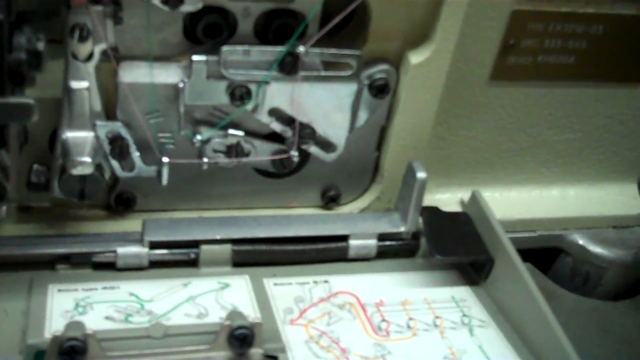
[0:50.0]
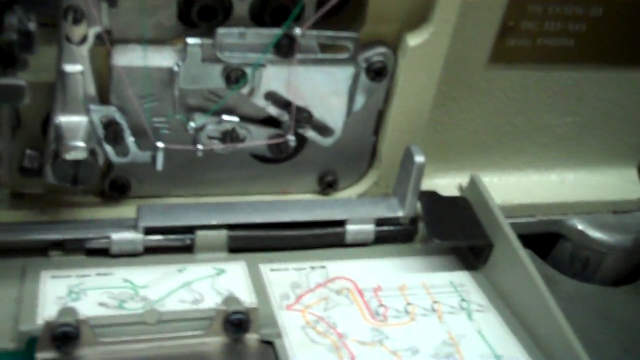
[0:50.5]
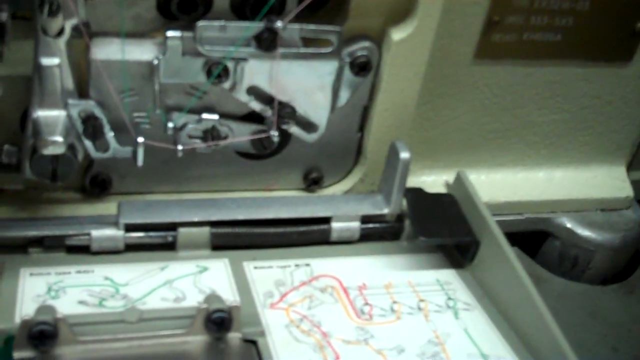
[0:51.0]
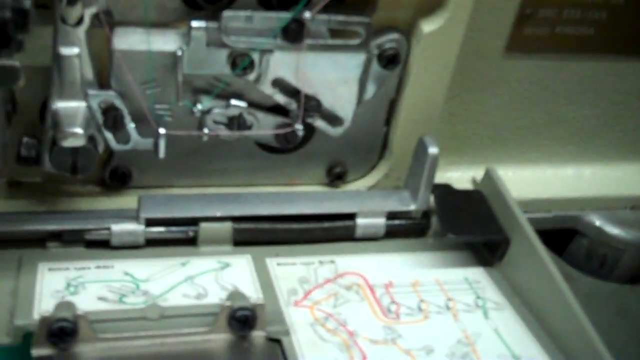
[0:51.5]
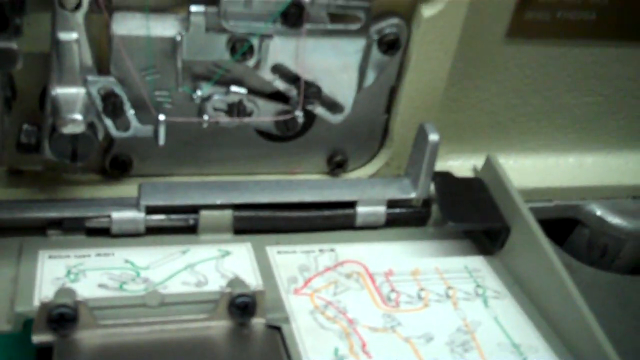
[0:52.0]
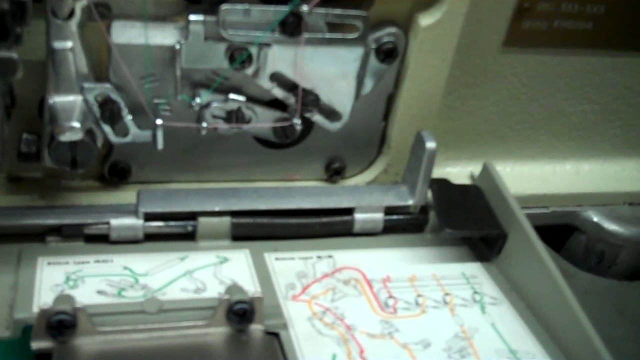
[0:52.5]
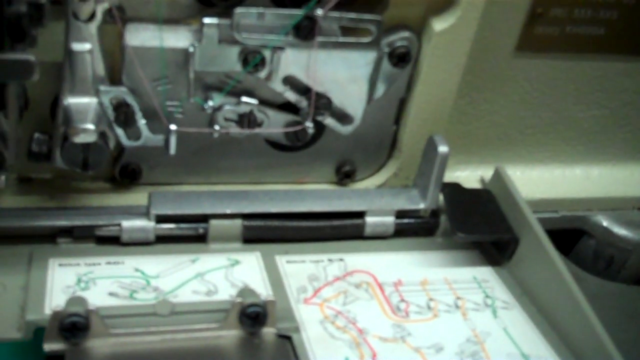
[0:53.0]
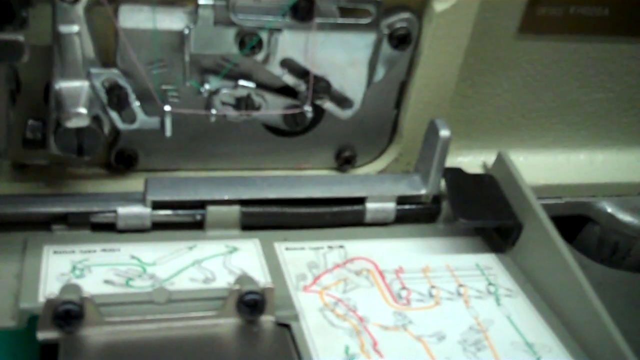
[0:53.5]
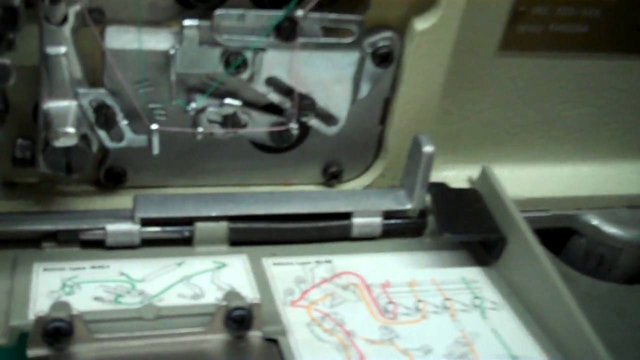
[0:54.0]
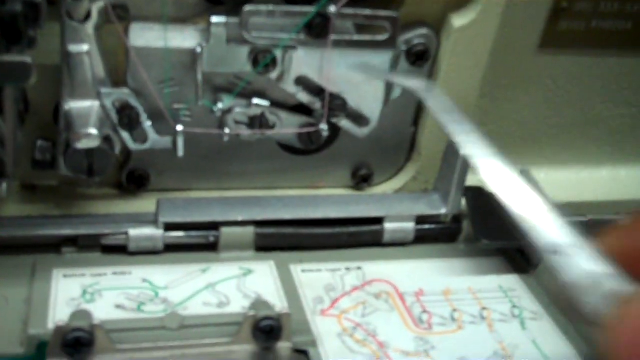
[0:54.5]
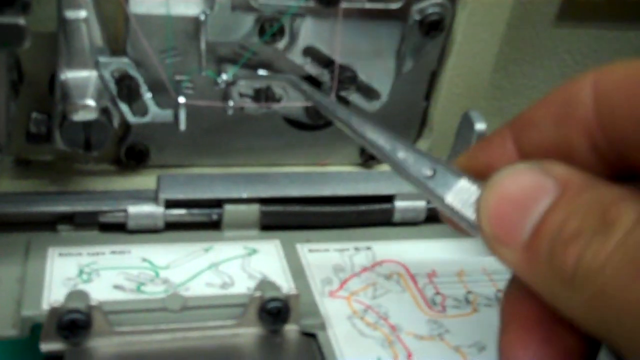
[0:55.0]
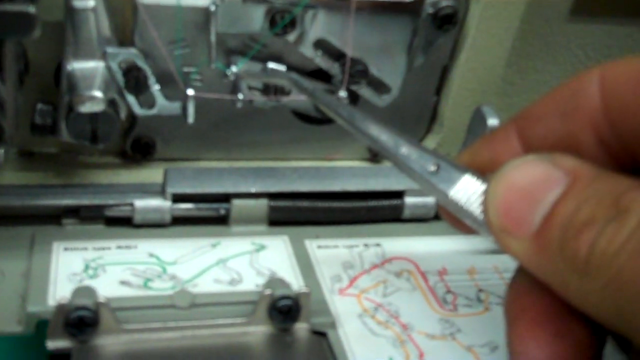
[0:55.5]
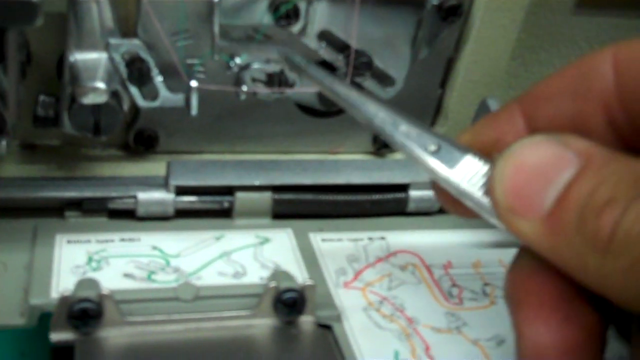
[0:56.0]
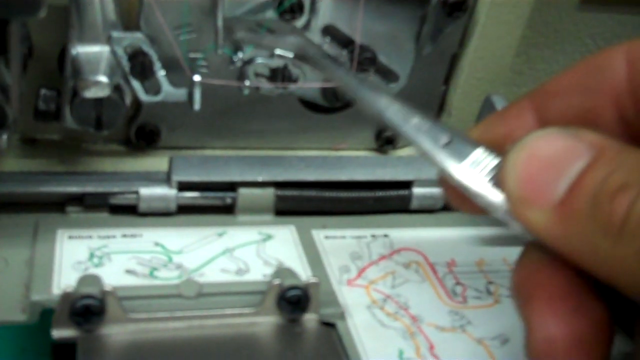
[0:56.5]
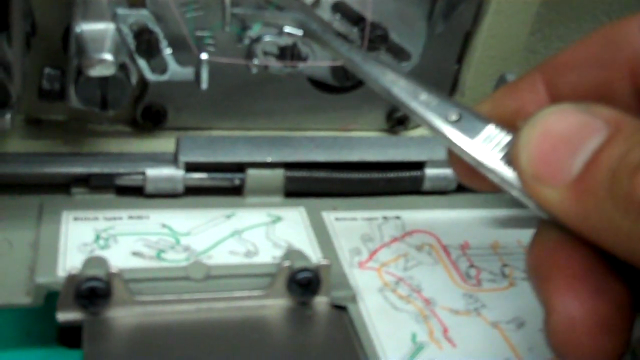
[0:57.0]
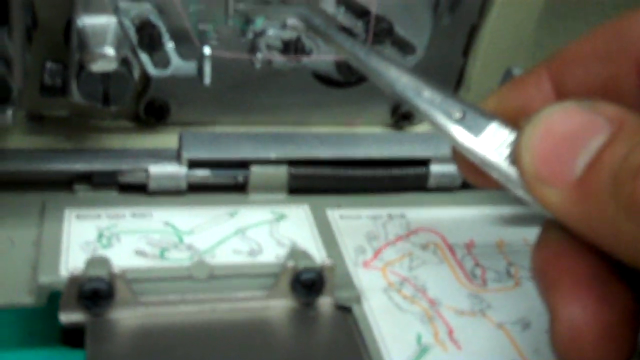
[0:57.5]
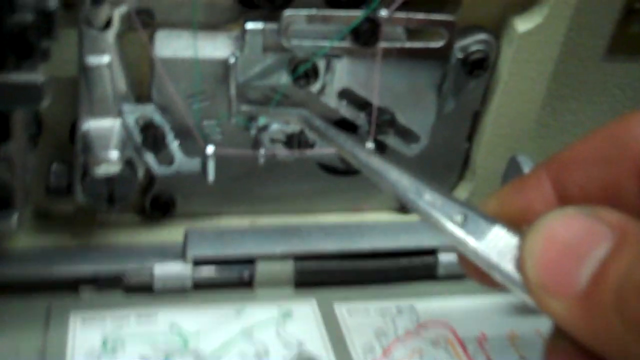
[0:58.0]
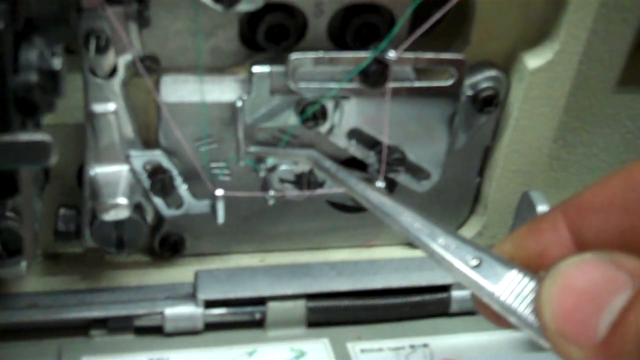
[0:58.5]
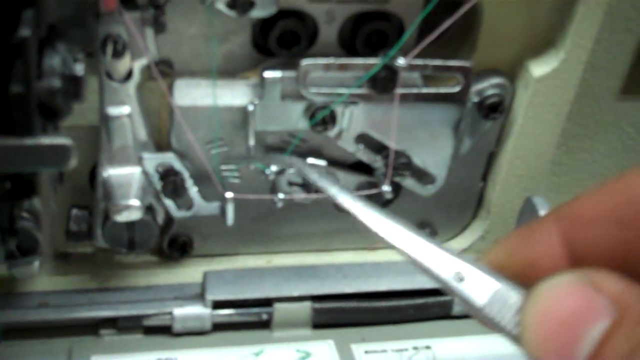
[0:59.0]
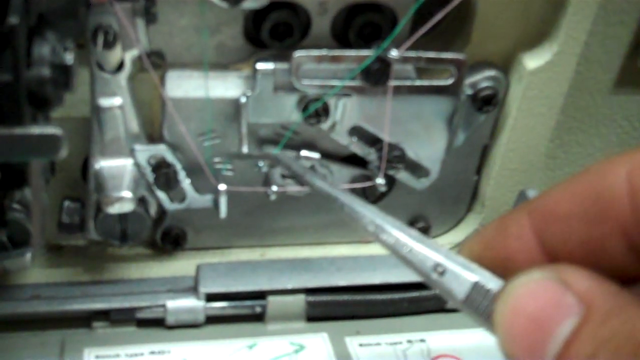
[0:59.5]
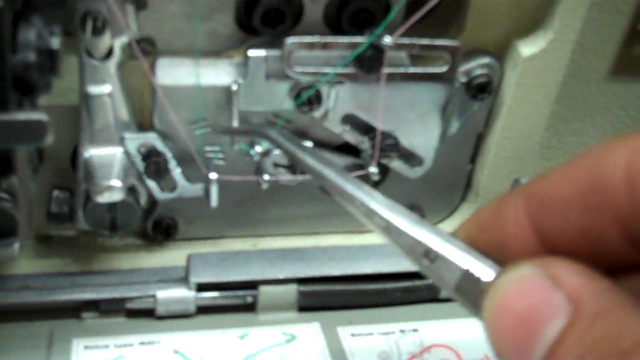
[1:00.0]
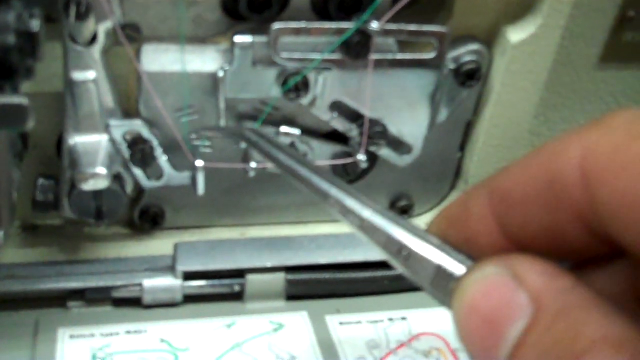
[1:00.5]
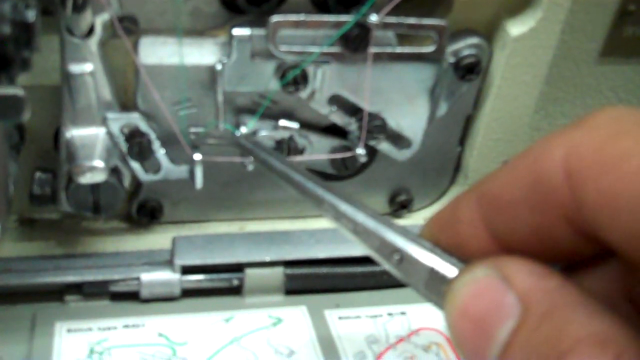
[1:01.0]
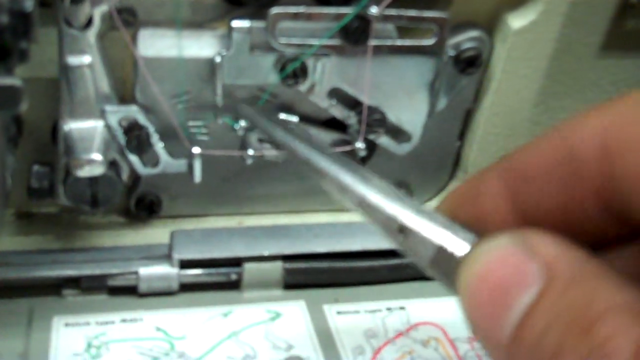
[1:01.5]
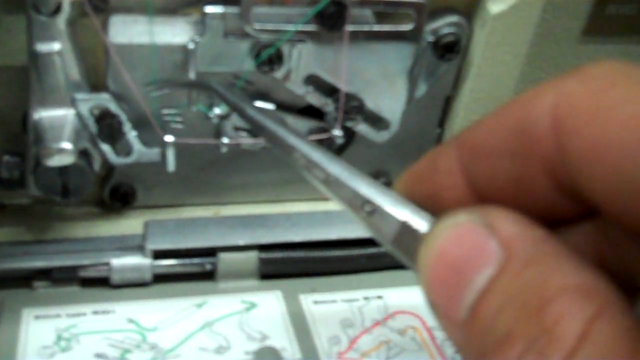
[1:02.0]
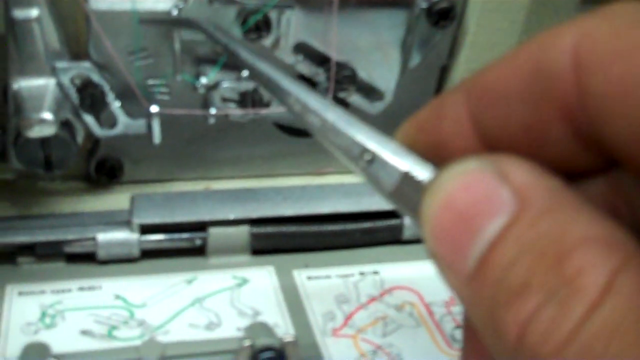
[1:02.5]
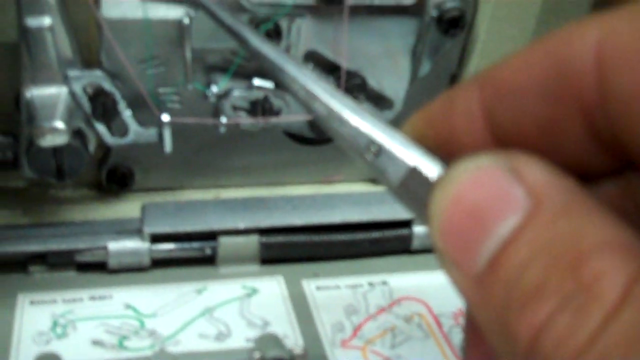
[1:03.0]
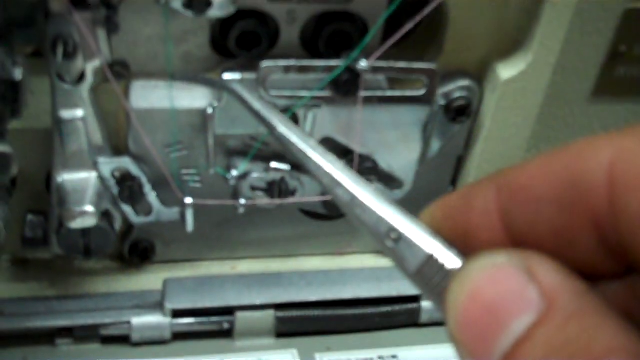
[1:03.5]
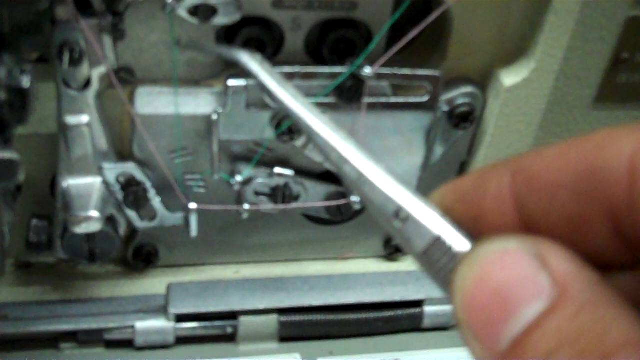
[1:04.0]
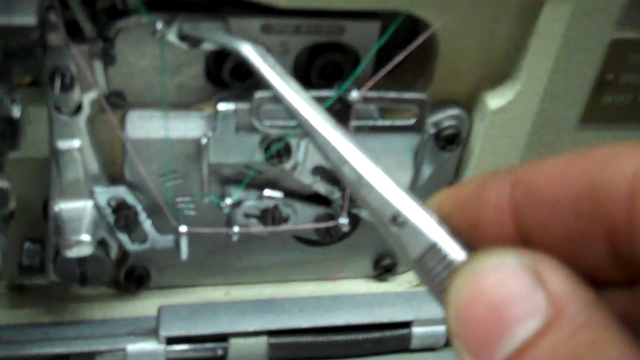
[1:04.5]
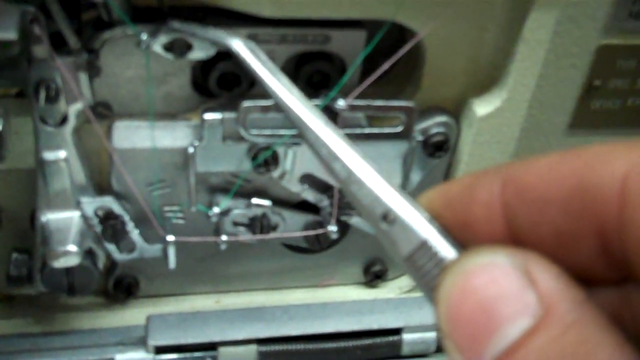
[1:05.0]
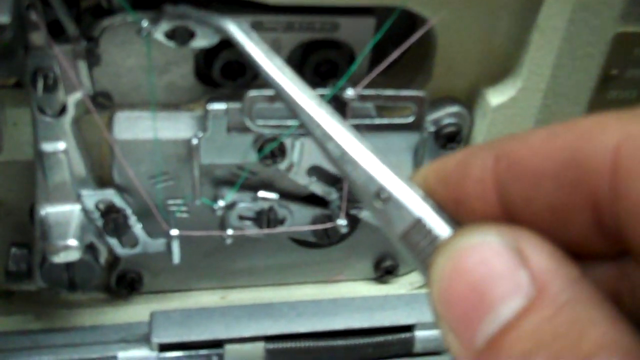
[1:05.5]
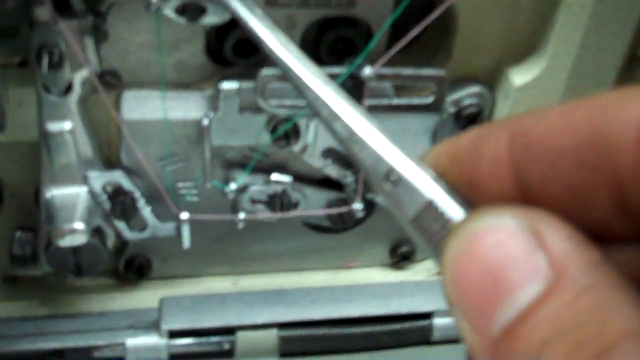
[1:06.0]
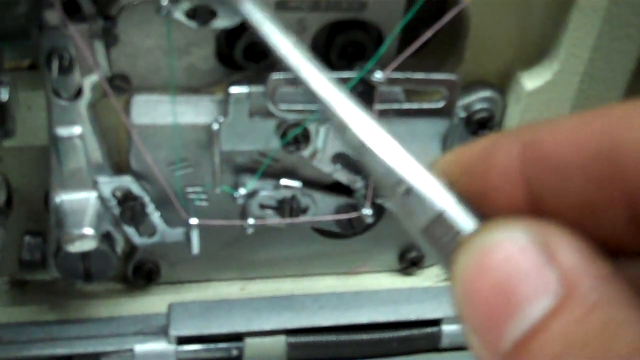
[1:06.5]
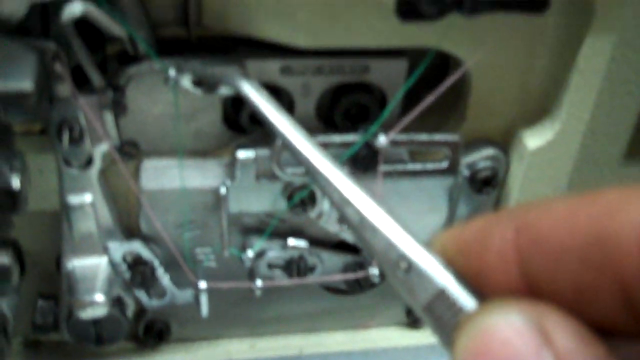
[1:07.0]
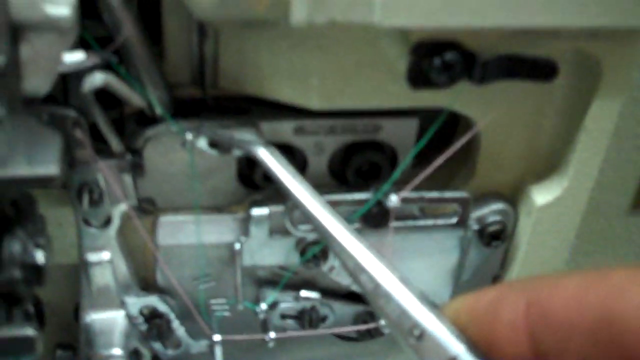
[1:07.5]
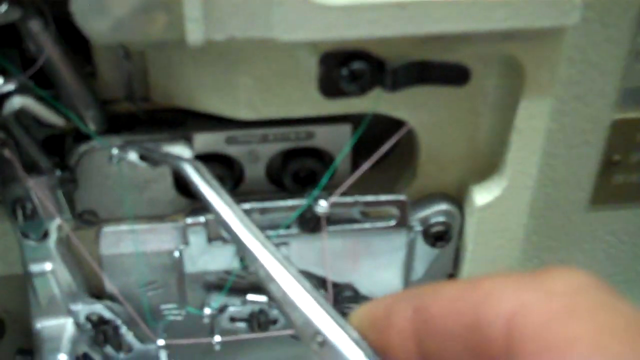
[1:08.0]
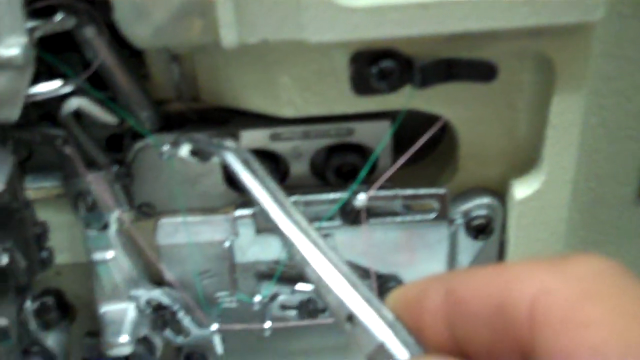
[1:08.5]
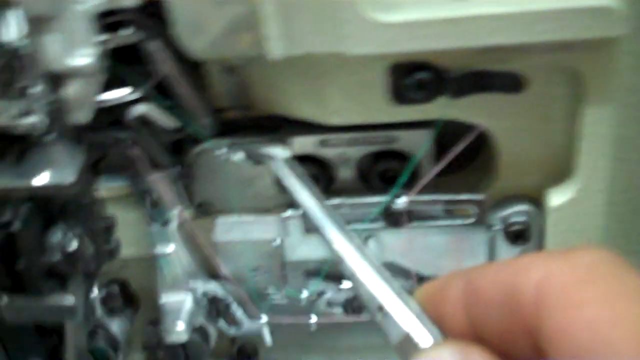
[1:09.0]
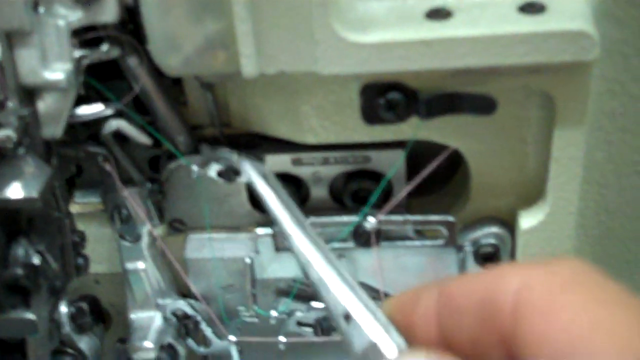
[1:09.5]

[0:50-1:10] A machine used for sewing or making things with the spools of thread is shown, with different metal features and screws connected together. A green thread is intertwined between the metal pieces and screws, along with another thread that appears to be light pink, possibly from the pink spool. The pink thread follows the outer edges or outline of the green thread. Below the metal pieces on the back of the machine are two diagrams with different colored lines drawn on them. The mechanical parts of the machine start to move, making the green and pink threads move. A hand holding a pair of tweezers makes adjustments and taps different spots, and the metal parts stop moving.